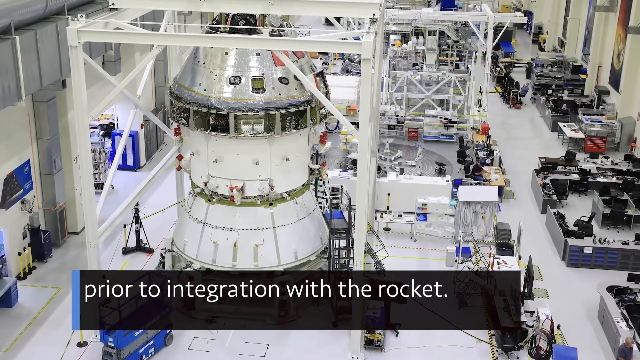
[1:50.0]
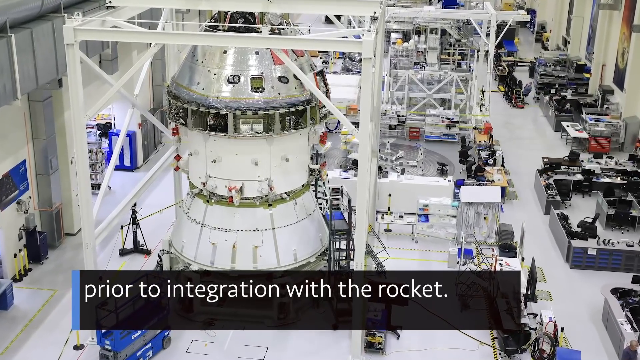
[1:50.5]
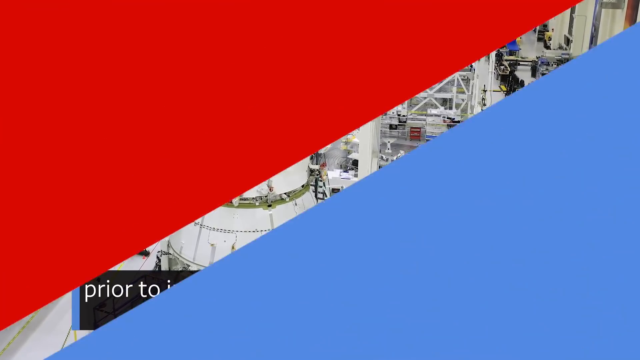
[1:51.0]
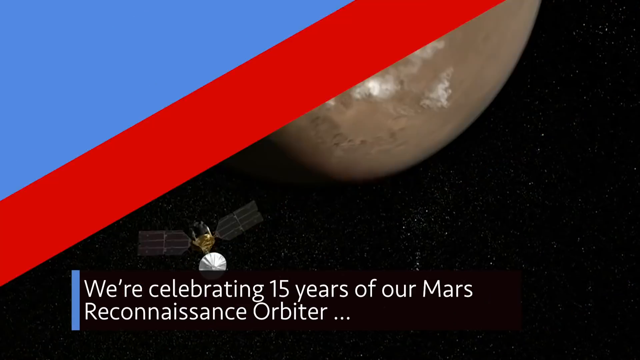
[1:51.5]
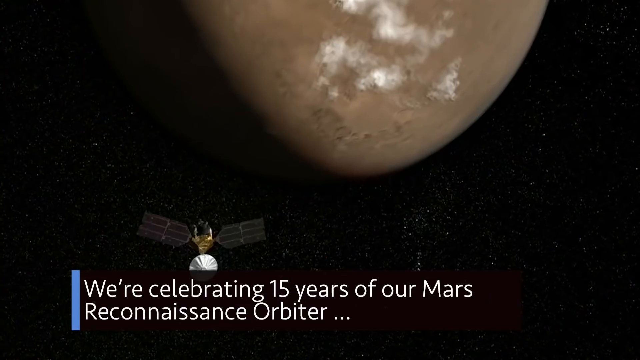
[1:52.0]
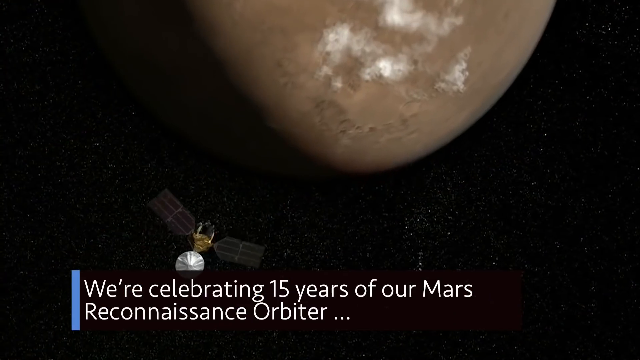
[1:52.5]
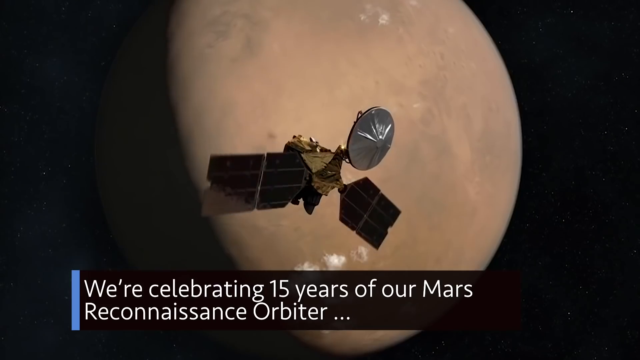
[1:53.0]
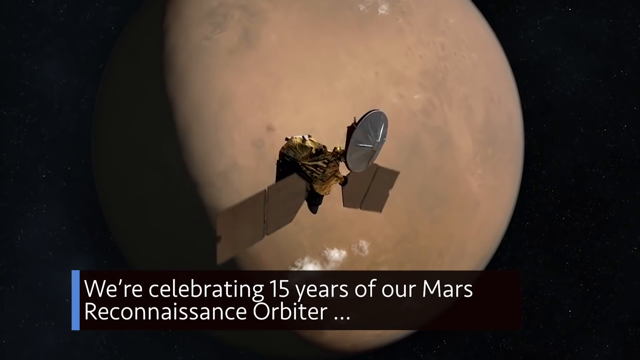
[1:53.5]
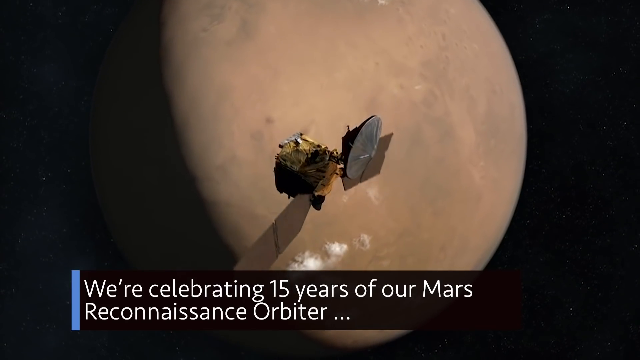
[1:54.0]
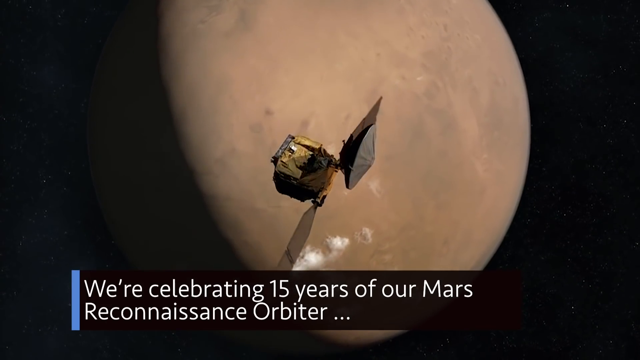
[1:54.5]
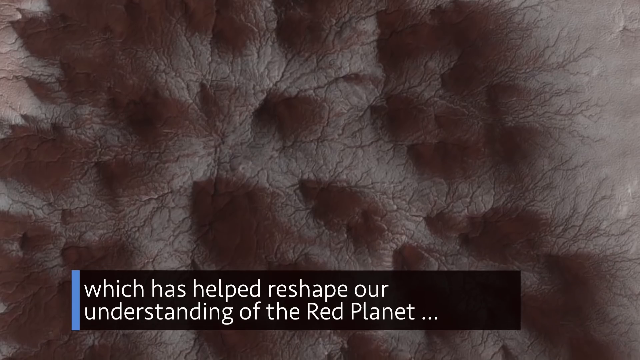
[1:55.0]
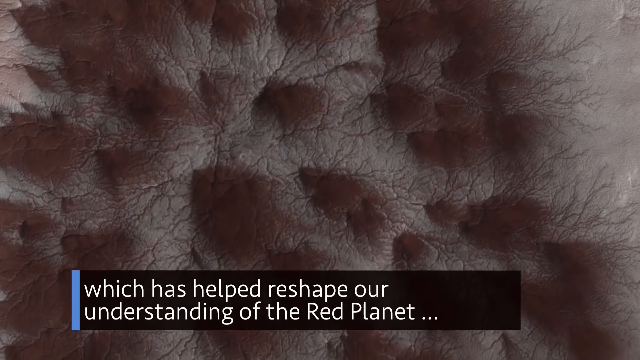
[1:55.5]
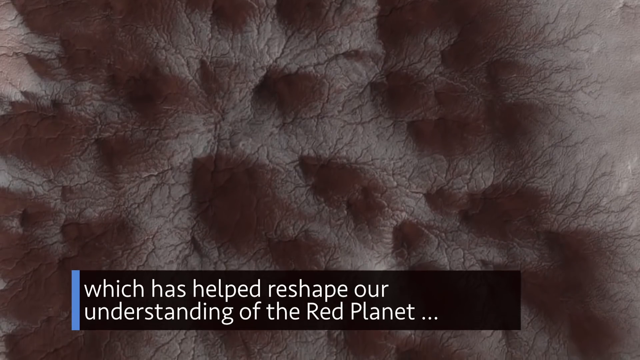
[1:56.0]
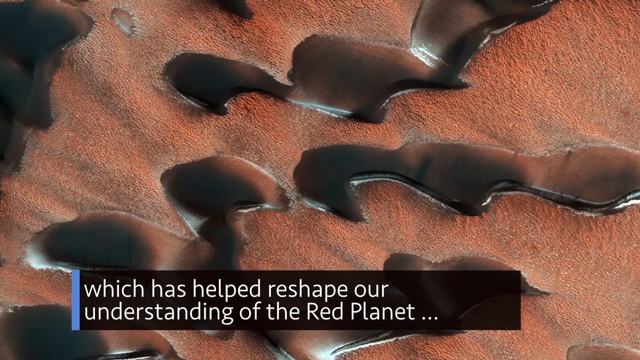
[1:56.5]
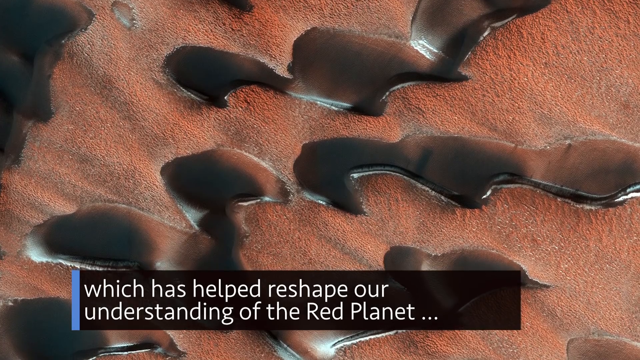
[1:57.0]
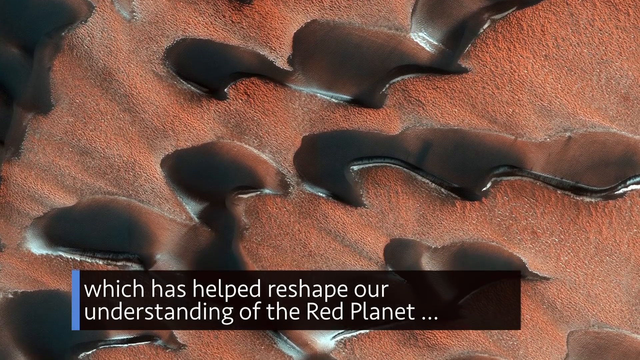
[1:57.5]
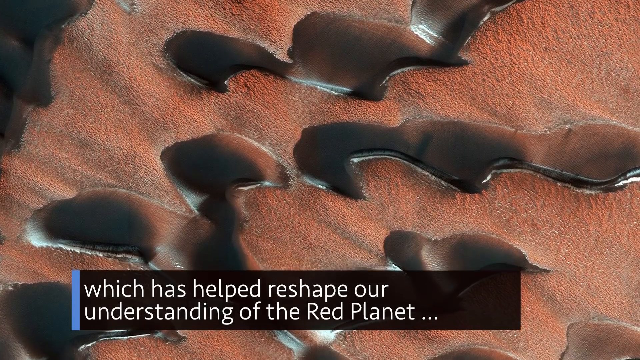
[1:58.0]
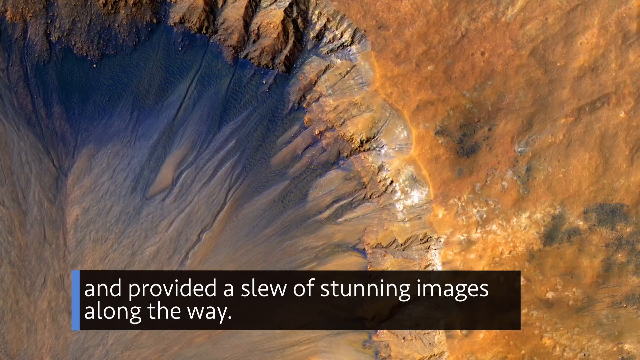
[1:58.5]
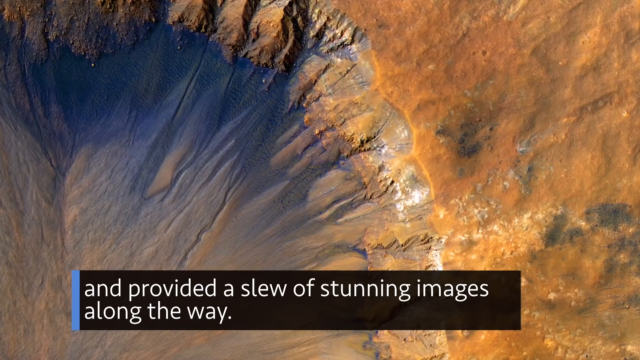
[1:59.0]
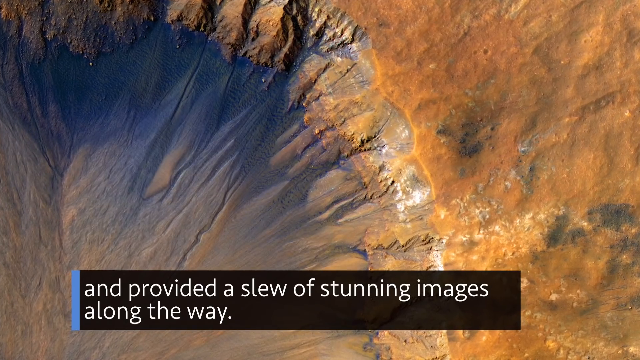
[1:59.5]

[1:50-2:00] Inside the Kennedy Space Center in Florida, the white and silver rocket part is shown. A red and blue transition leads to a scene in space that looks to be a generated image, with an orange planet behind and a little rocket in the foreground; the banner at the bottom reads "we're celebrating 15 years of our Mars Reconnaissance Orbiter," which is likely the little piece flying in space. The scene changes to views of Mars: light pink ground with red, sort of bushel-like shapes coming out of it, and the text "which has helped reshape our understanding of the red planet." Next is red sand with what looks to be water droplets on top of it, and then what kind of looks like a crater system, orange and blue on the ground.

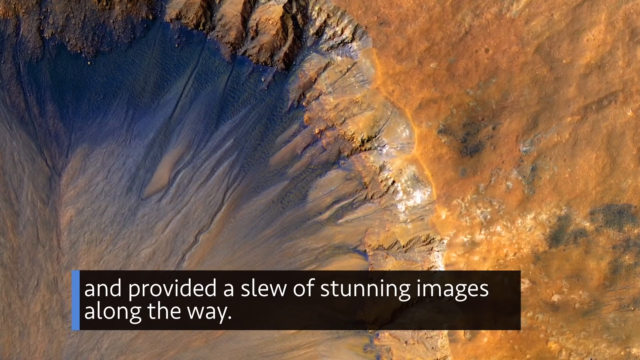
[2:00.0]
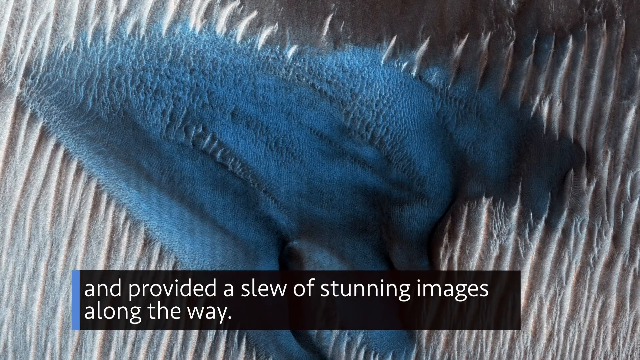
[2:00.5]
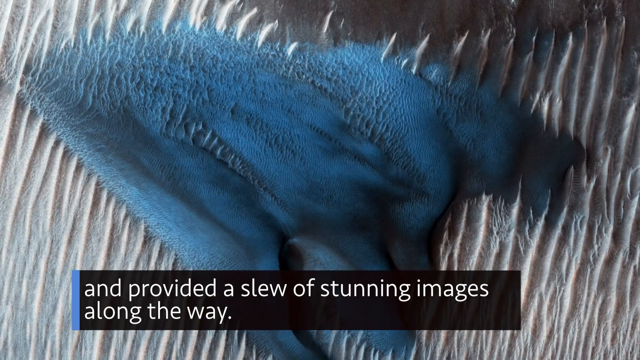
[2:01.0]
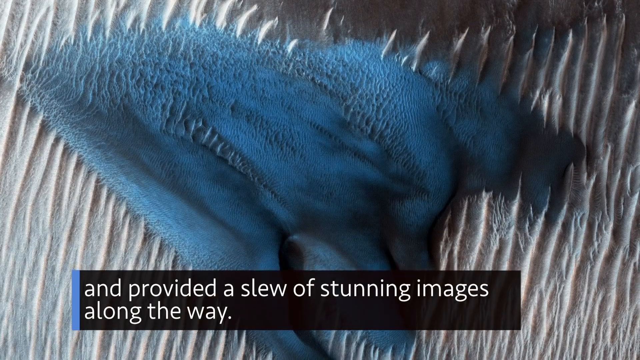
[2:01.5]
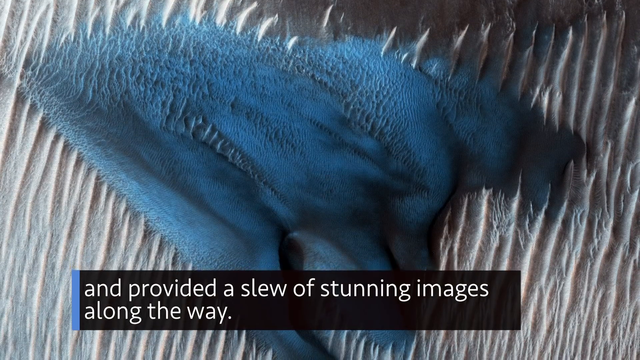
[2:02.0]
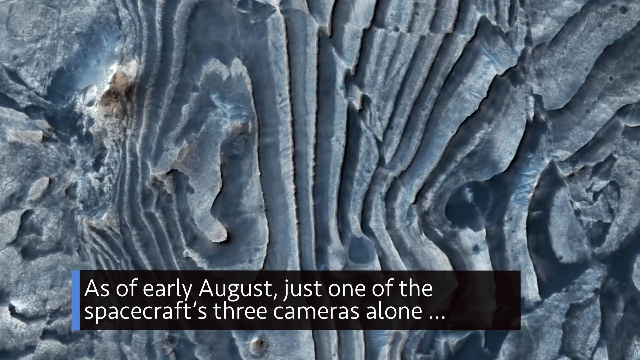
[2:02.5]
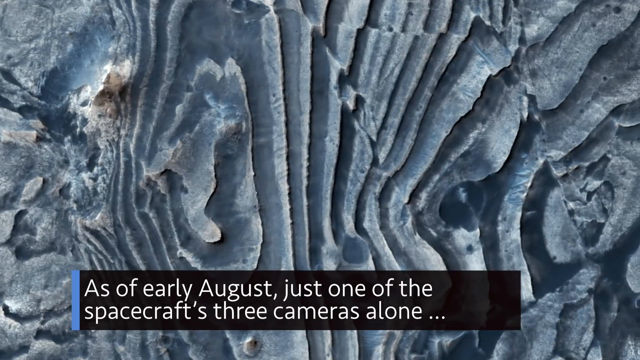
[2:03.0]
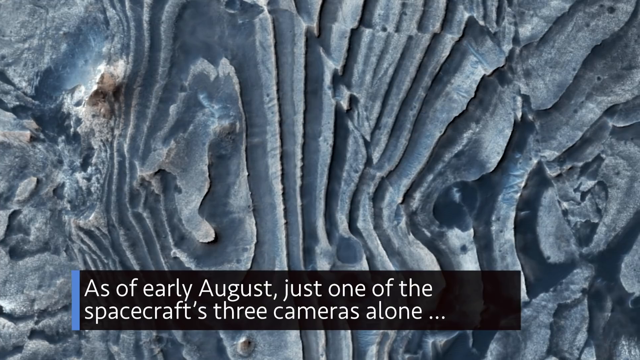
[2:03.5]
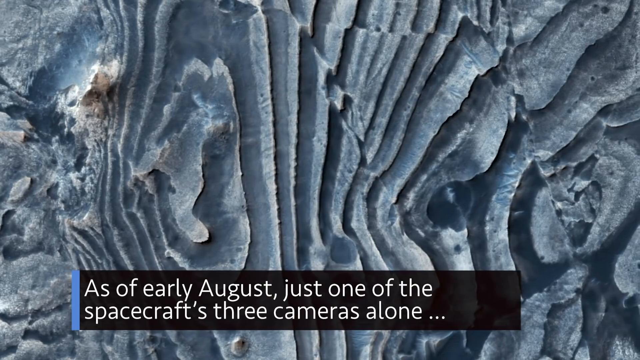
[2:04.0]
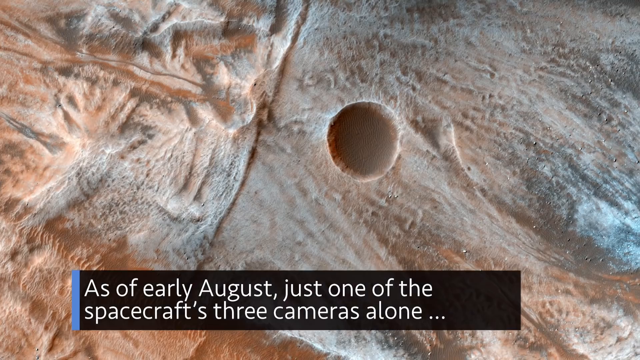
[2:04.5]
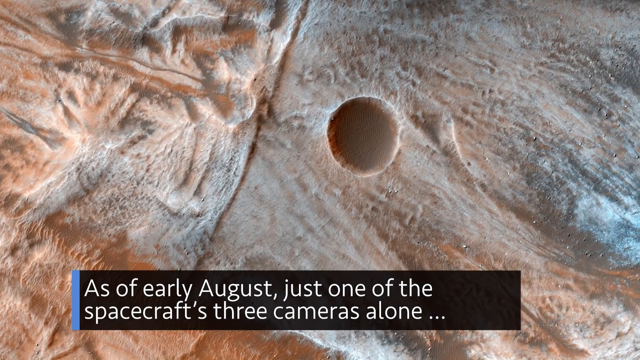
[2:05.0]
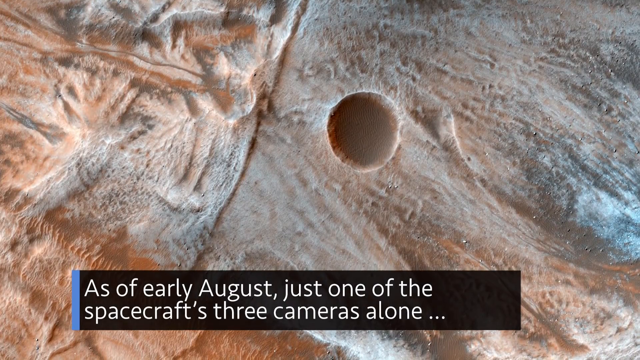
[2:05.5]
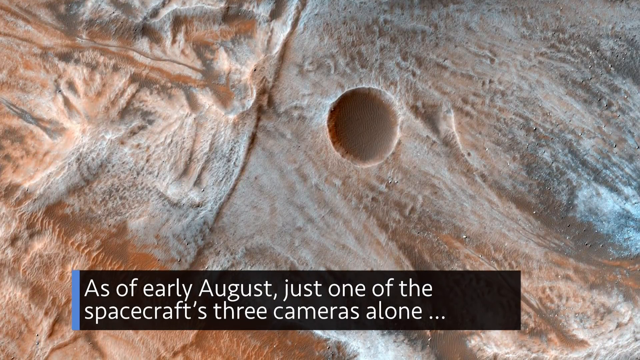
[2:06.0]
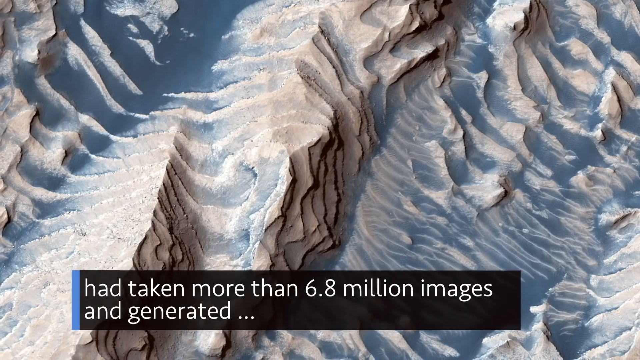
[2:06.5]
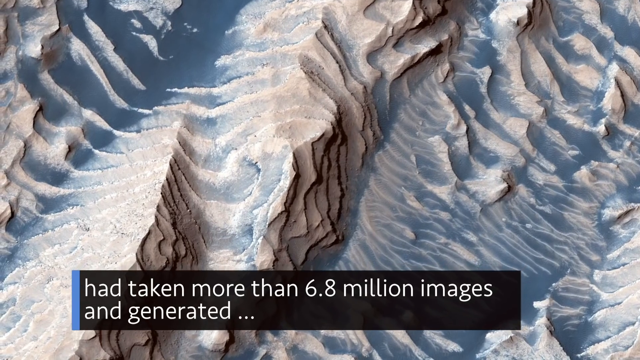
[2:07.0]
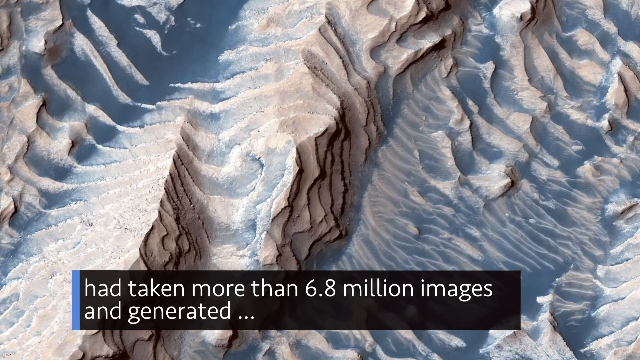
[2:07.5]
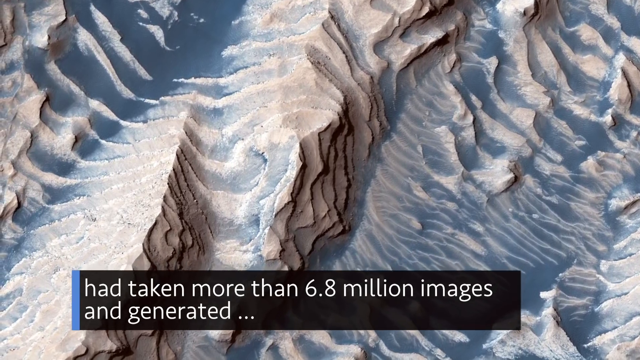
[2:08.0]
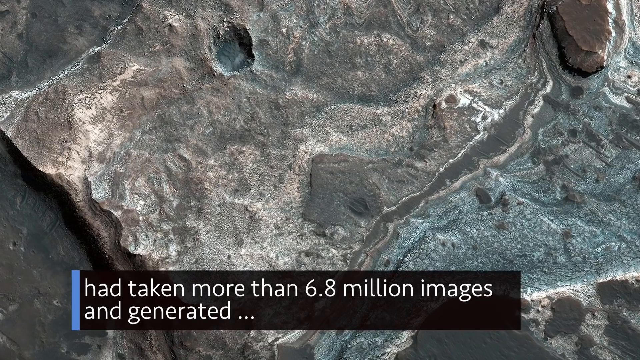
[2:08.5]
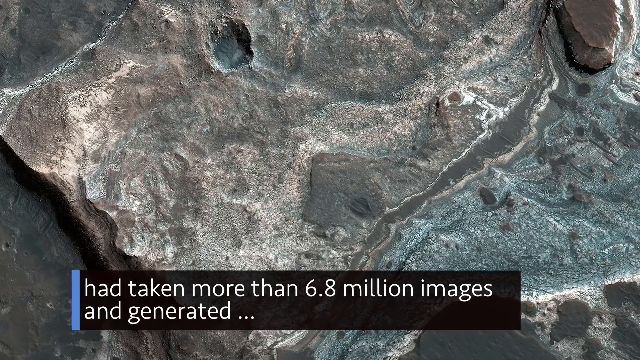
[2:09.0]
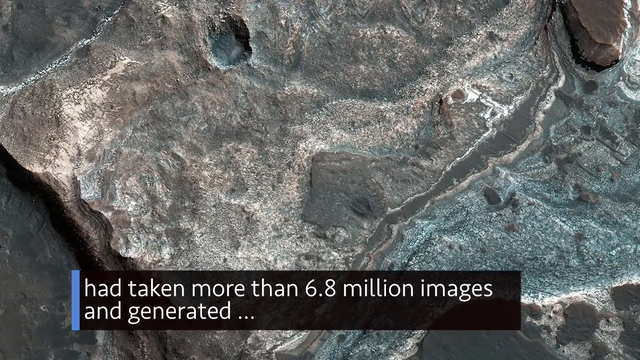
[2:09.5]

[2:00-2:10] More views of Mars follow. A silver and blue picture of the ground appears with the banner "and provided a slew of stunning images along the way." Another view shows what looks like a blue and gray sort of mountain system with some white, and the banner changes to "as of early August just one of the spacecraft's three cameras alone." Then a crater on the Martian surface is shown with an orange, sandy atmosphere, followed by tan, blue and white mountain peaks with the banner "had taken more than 6.8 million images and generated." Finally, a rocky view of the planet shows rock of a dark gray and brown sort of color with white highlighting.